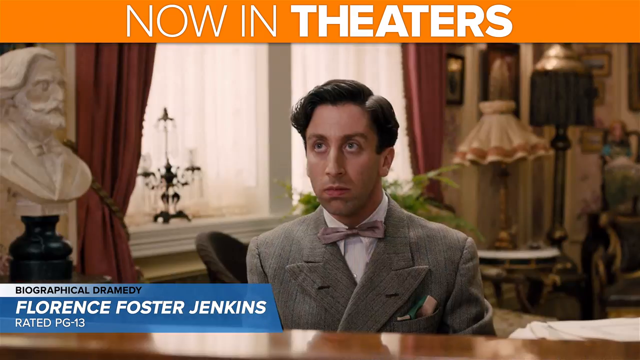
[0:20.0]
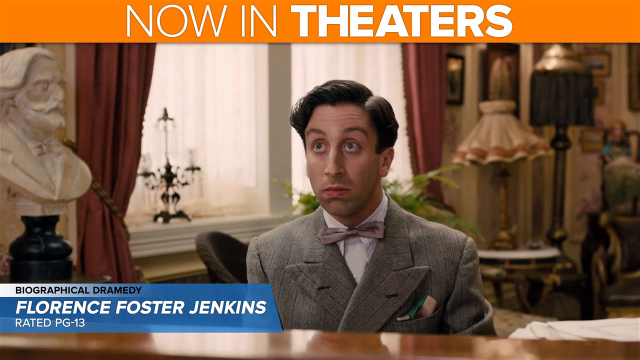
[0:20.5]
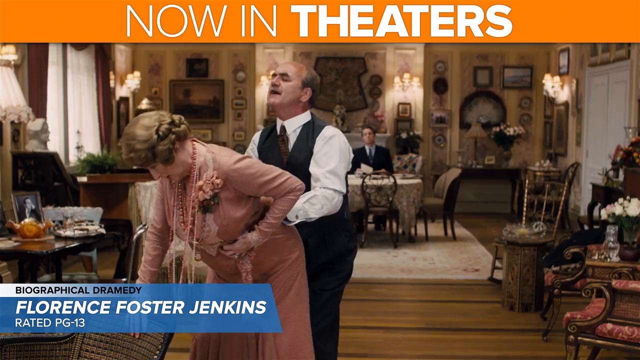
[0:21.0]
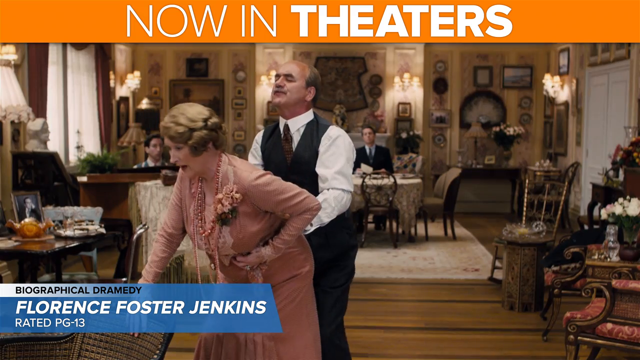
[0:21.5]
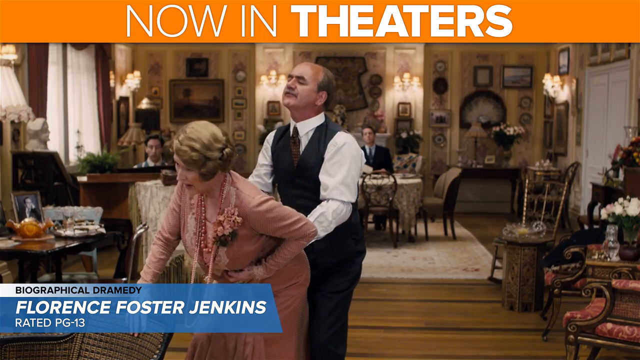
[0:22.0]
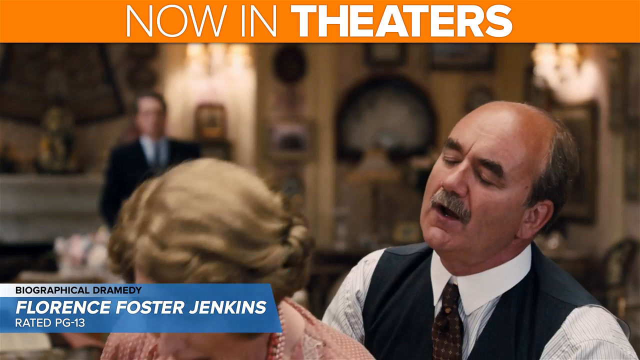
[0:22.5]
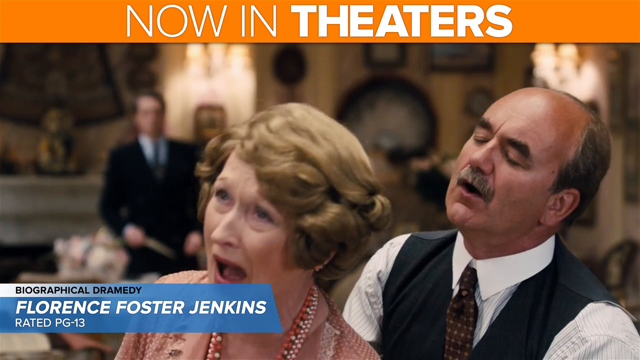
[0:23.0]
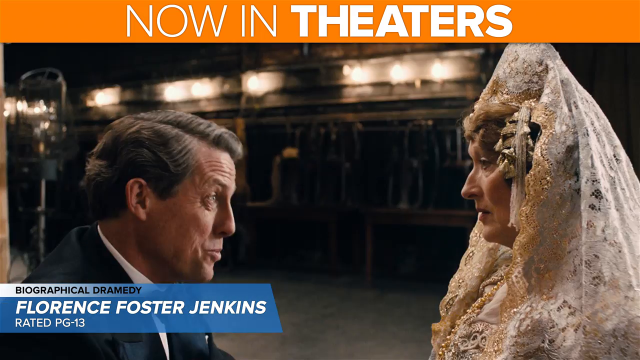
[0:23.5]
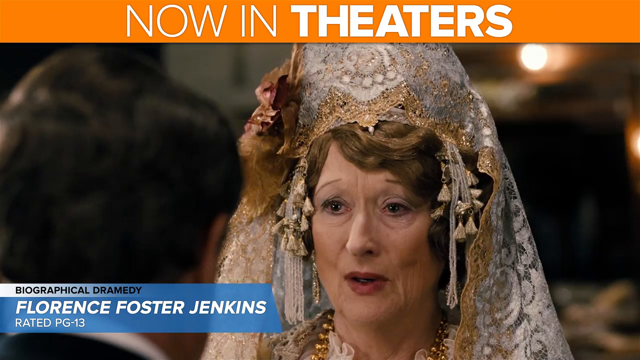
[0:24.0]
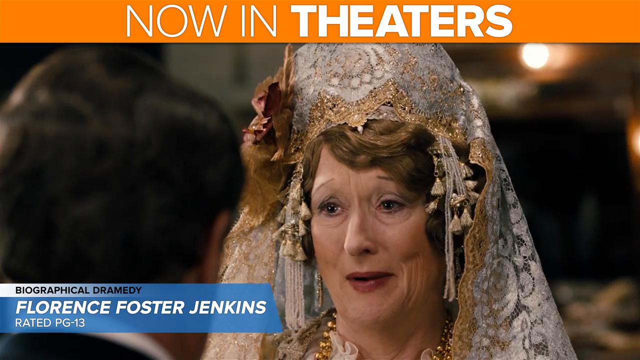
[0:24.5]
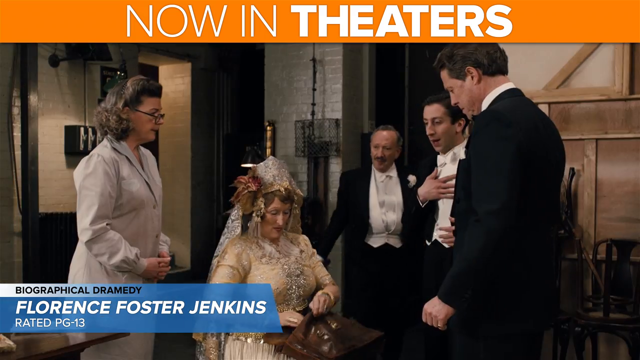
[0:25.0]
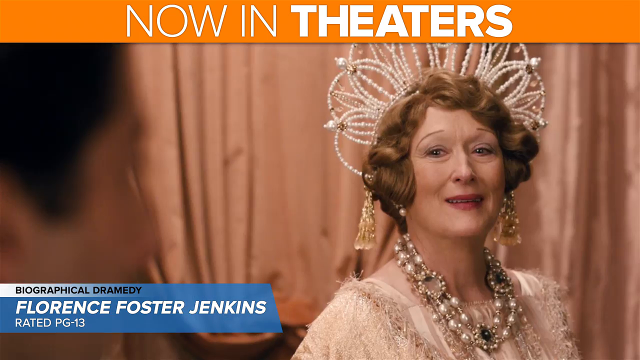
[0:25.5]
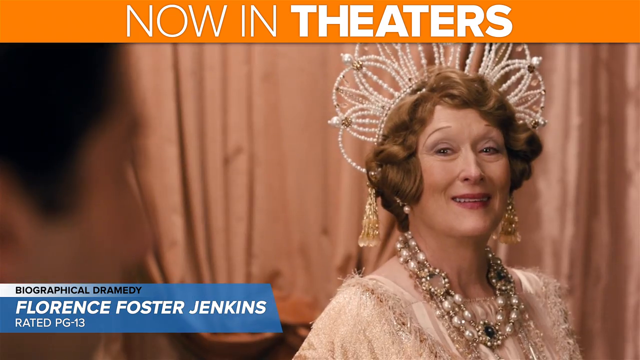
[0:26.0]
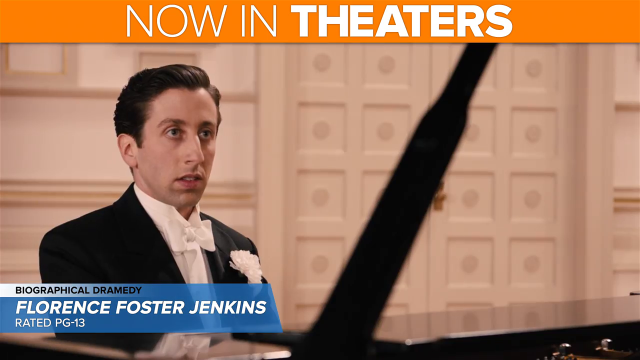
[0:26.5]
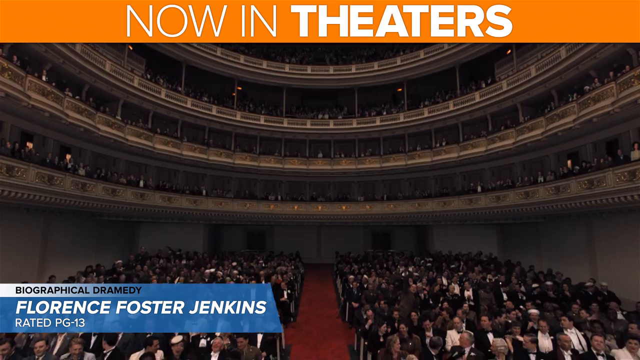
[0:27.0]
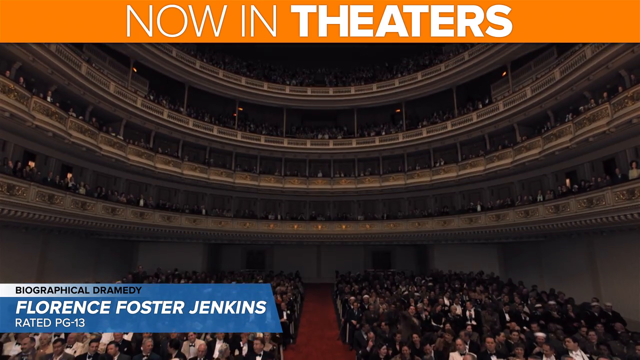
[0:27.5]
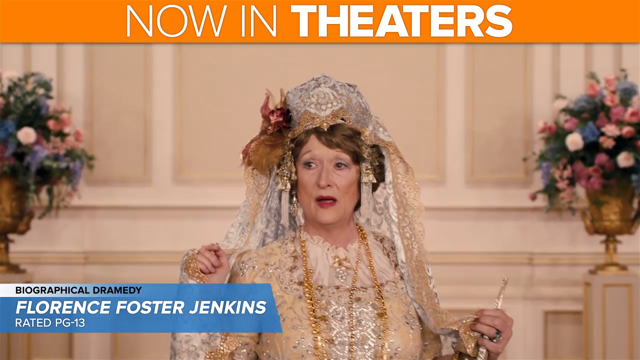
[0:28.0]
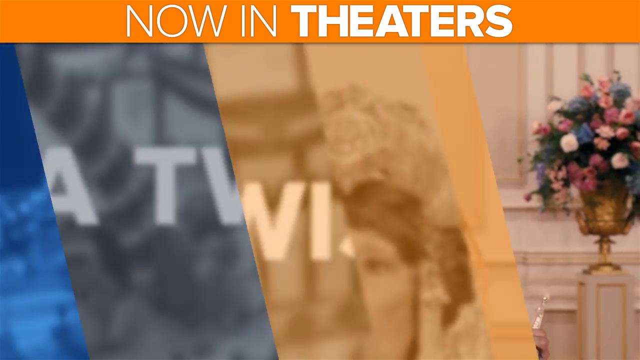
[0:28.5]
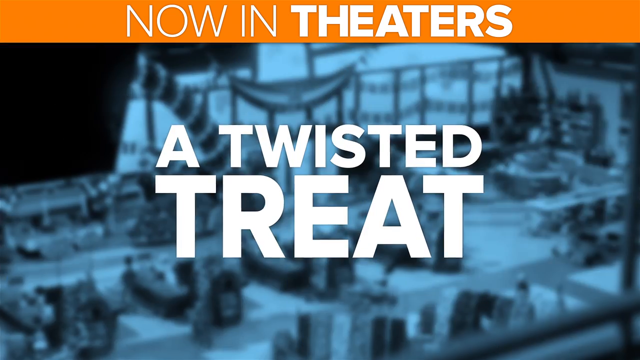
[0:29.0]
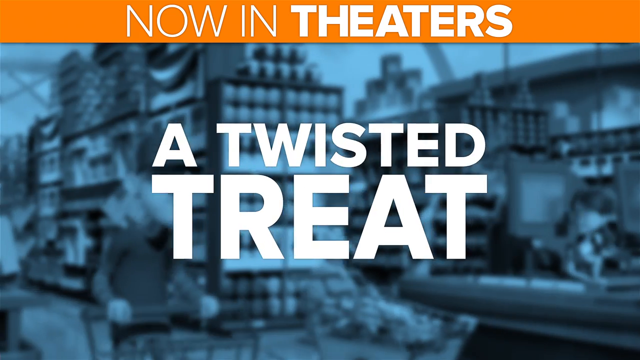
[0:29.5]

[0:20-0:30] The old woman seems to want to carry the old man on her back, but she fails and they start laughing. She is dressed in some kind of royal, very old-school way. Next comes a place that looks like a hall full of people, like a place for a gathering or maybe a wedding. A man appears to be playing a piano. An old lady in a very long dress looks very nice and keeps smiling.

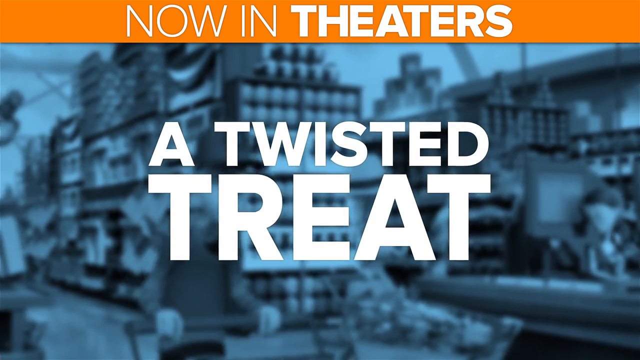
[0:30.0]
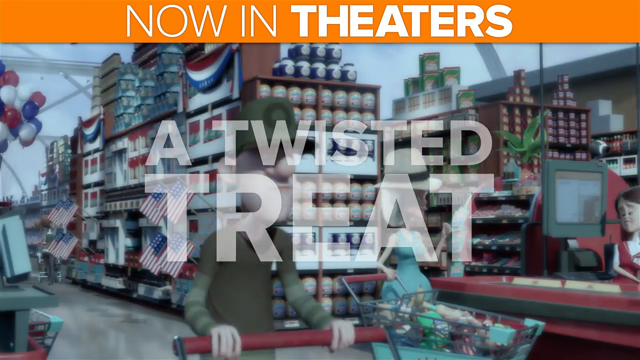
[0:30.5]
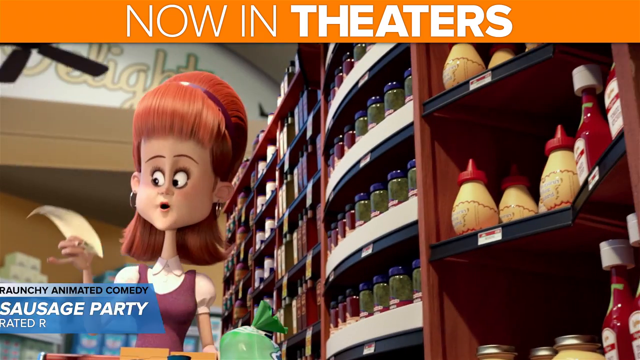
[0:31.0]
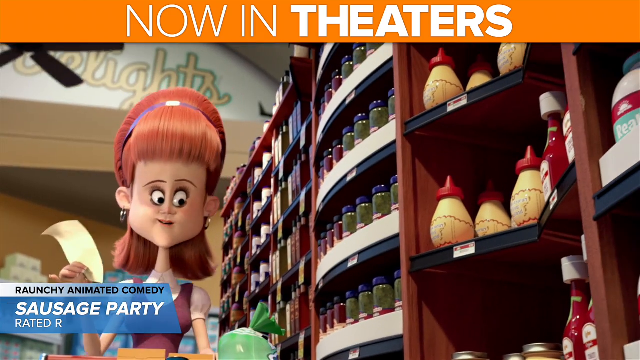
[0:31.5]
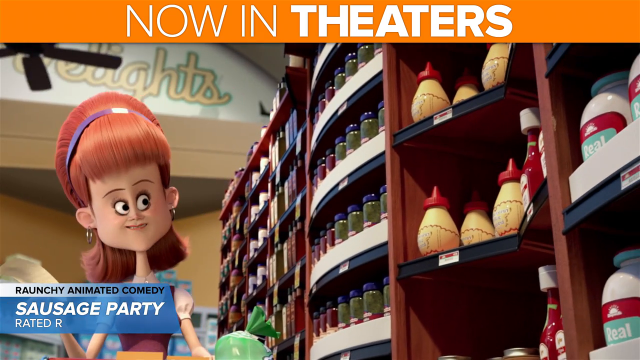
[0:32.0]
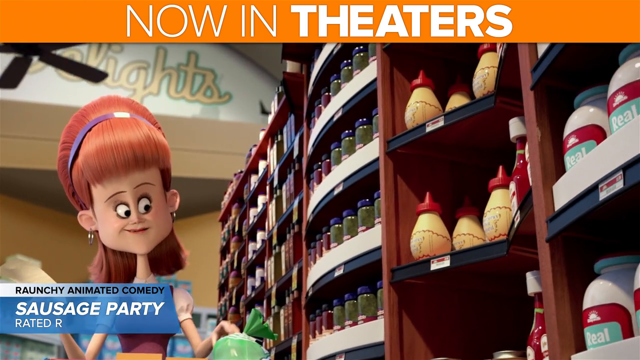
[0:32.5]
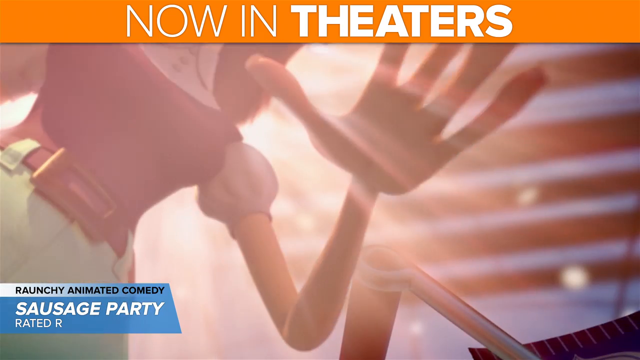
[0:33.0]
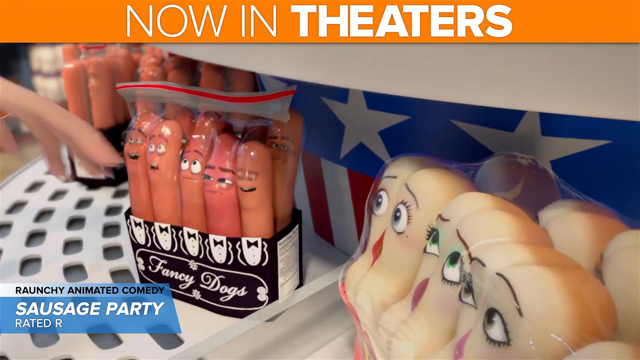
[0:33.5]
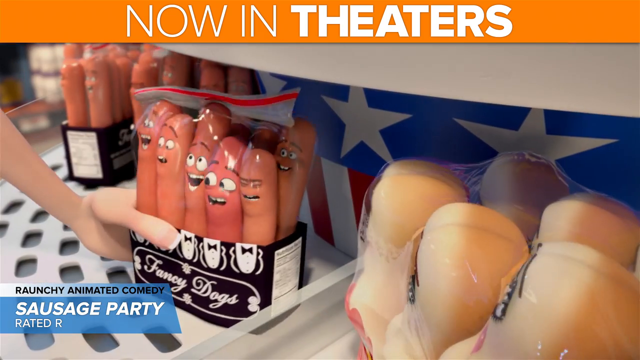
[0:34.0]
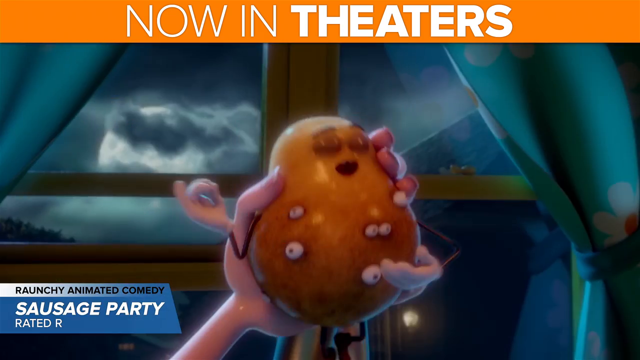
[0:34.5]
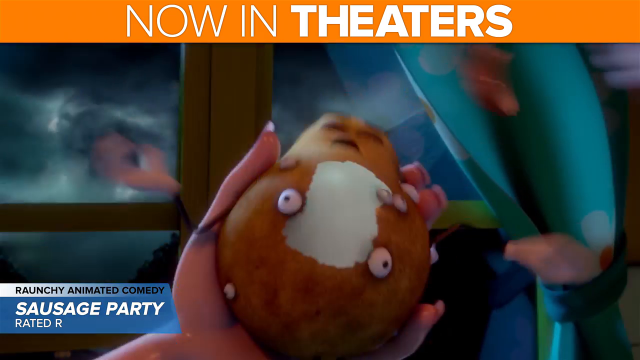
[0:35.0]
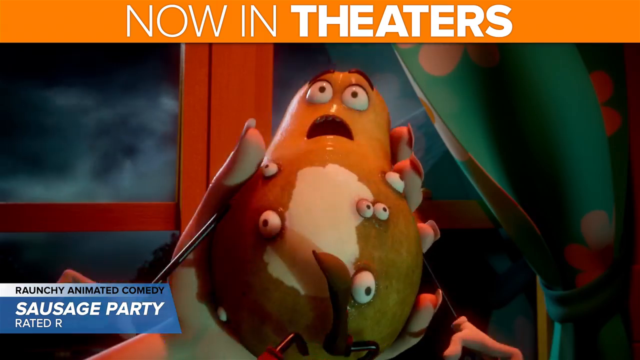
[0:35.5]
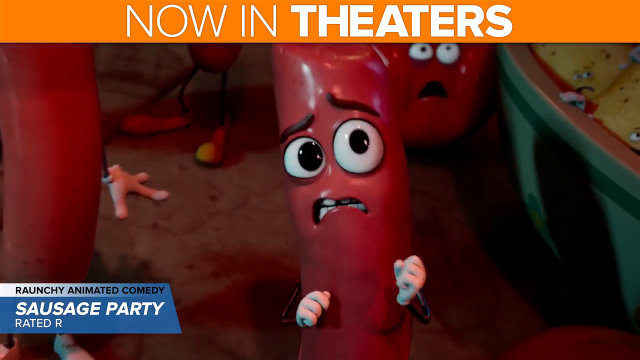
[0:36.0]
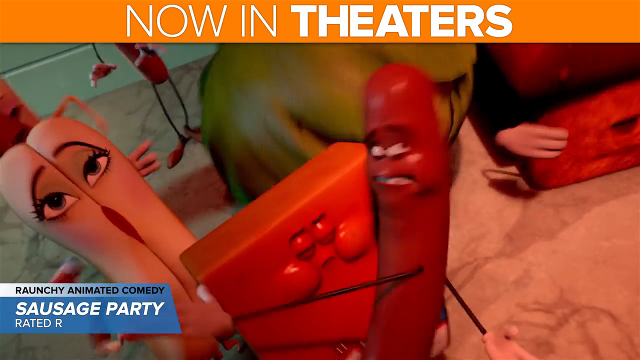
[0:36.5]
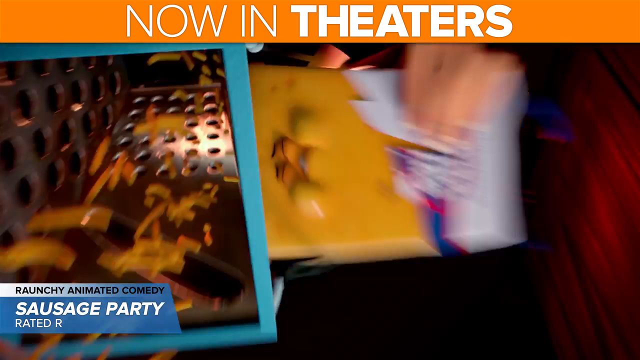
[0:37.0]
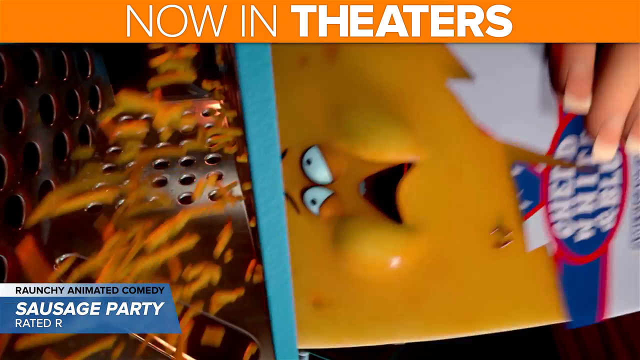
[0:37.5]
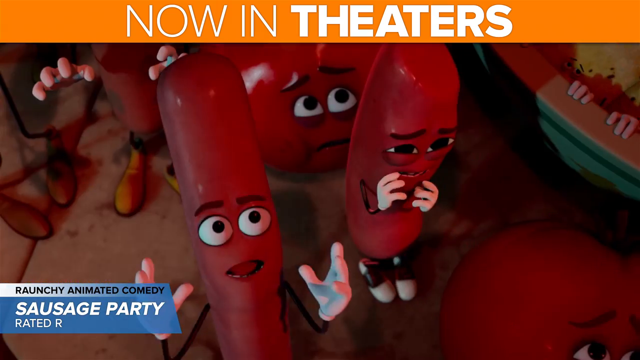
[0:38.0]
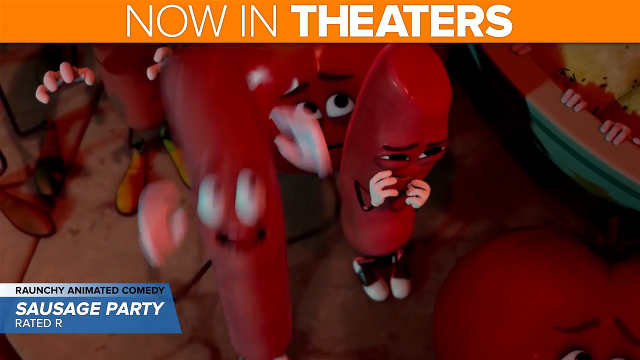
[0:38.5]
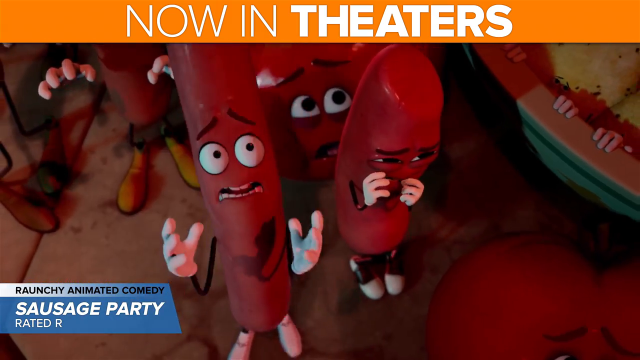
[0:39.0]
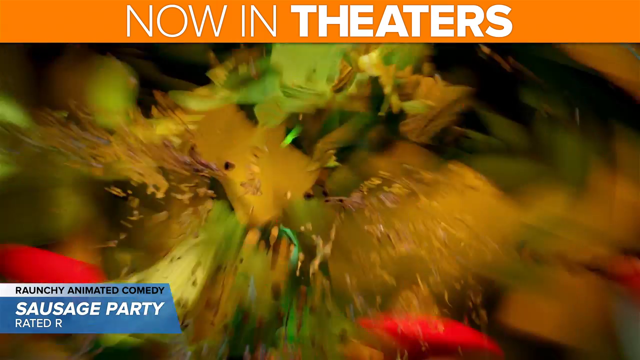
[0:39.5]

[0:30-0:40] A cartoon appears with text reading "now in theaters" and "Sausage Party," the name of the animated movie. Some of the cartoon characters look like sausages. A cartoon lady is doing her shopping and picks up a packet of the sausages, which look alive and appear scared of being taken, crying. She also buys some chips that also look alive.